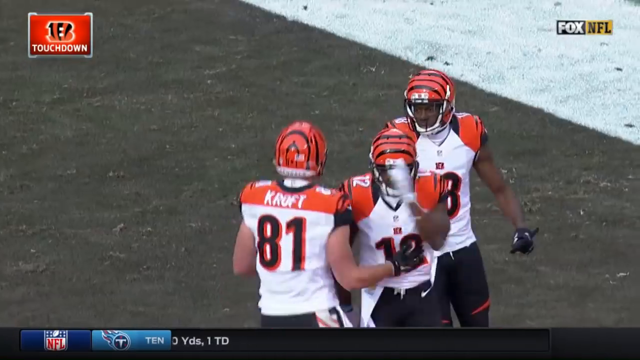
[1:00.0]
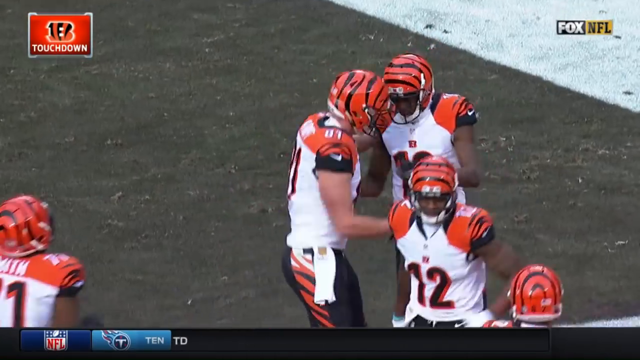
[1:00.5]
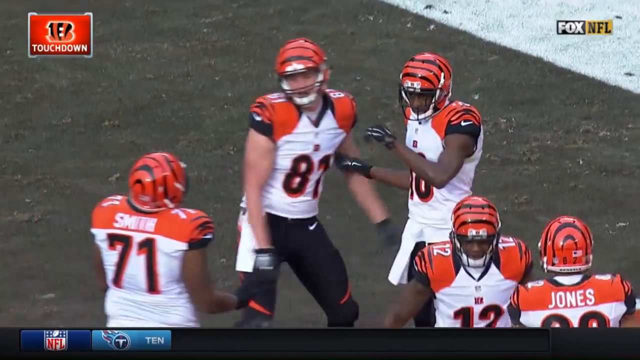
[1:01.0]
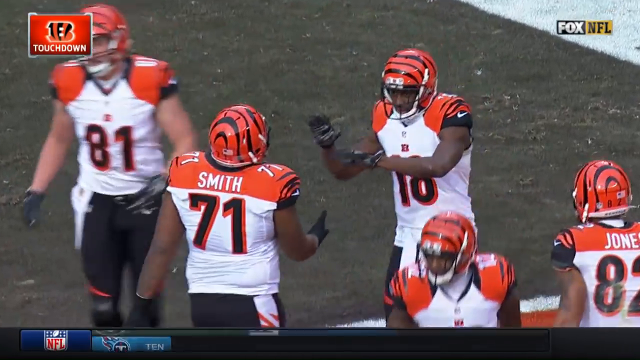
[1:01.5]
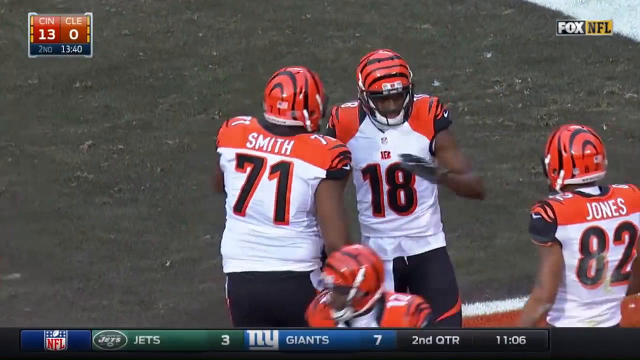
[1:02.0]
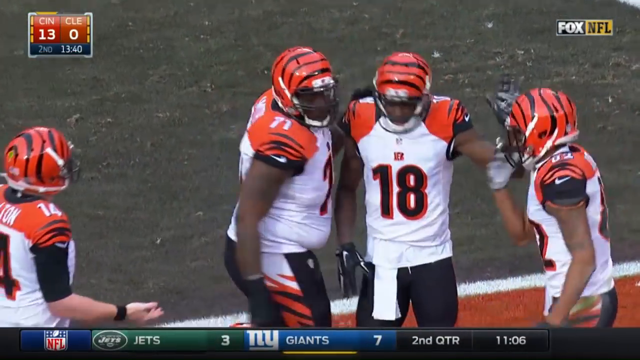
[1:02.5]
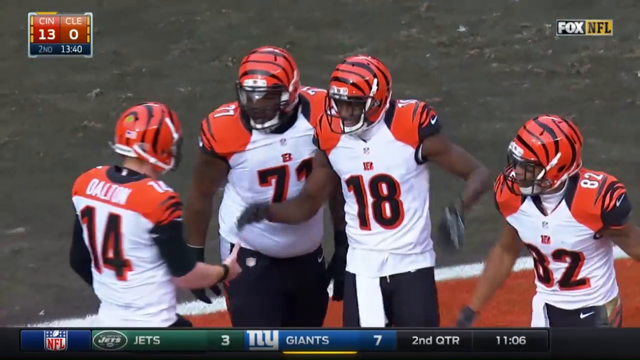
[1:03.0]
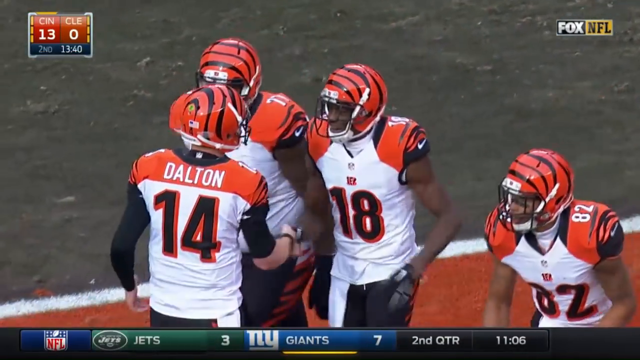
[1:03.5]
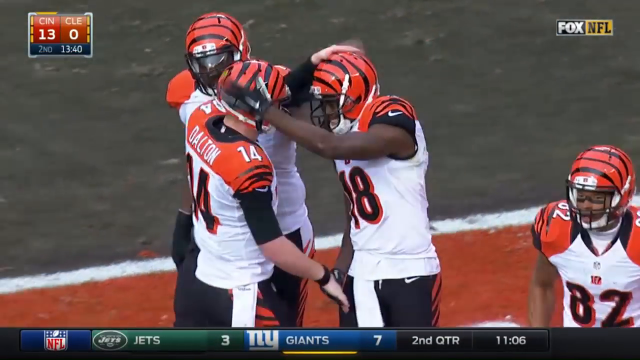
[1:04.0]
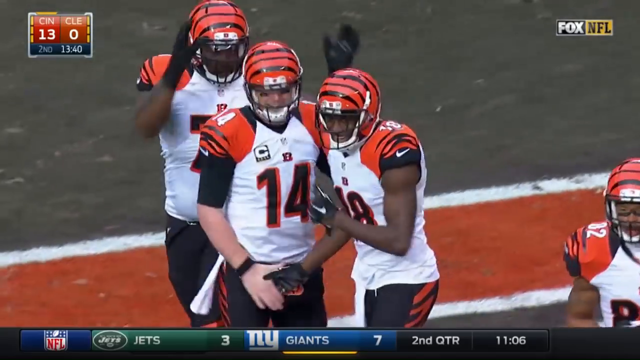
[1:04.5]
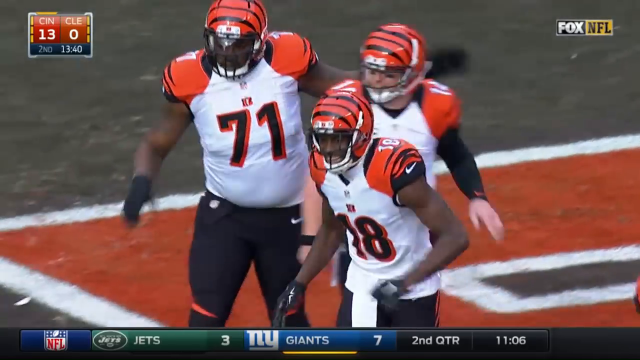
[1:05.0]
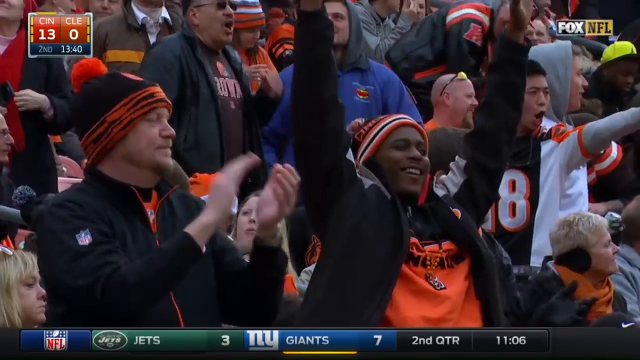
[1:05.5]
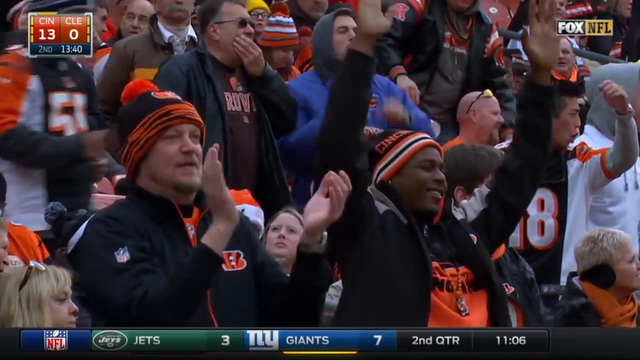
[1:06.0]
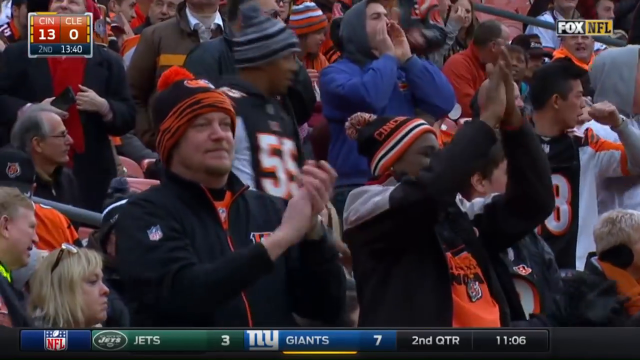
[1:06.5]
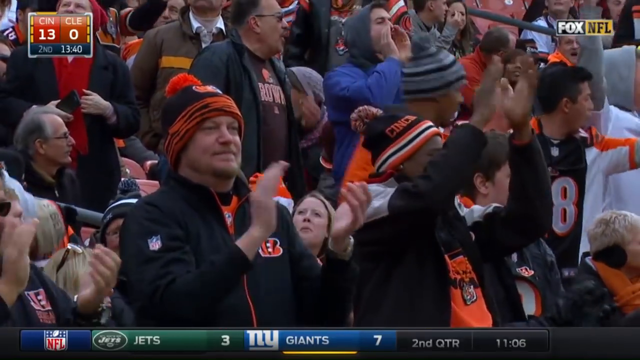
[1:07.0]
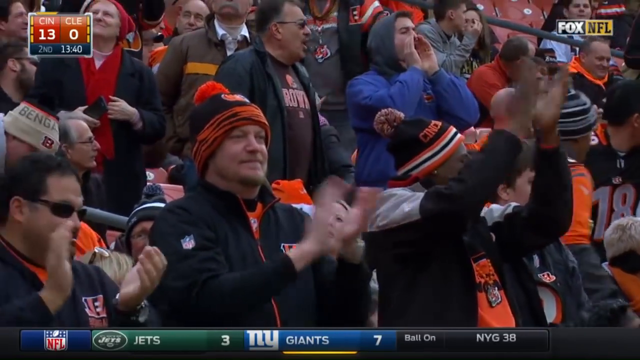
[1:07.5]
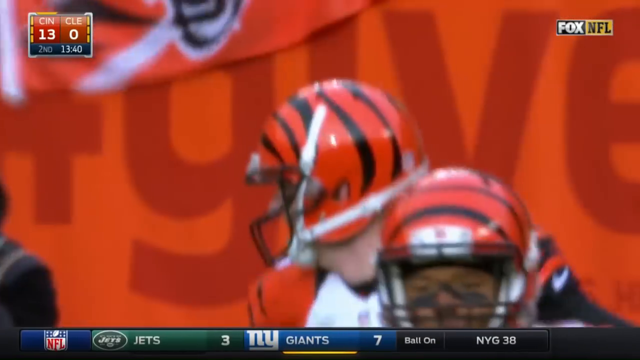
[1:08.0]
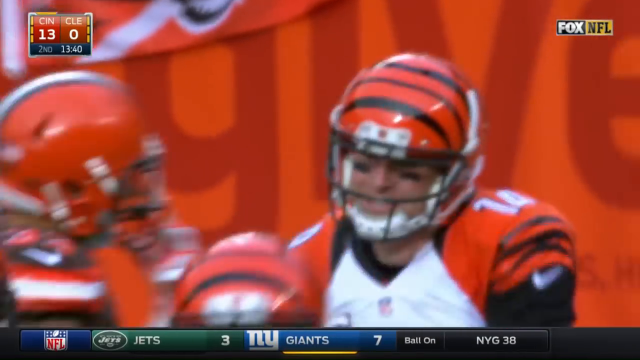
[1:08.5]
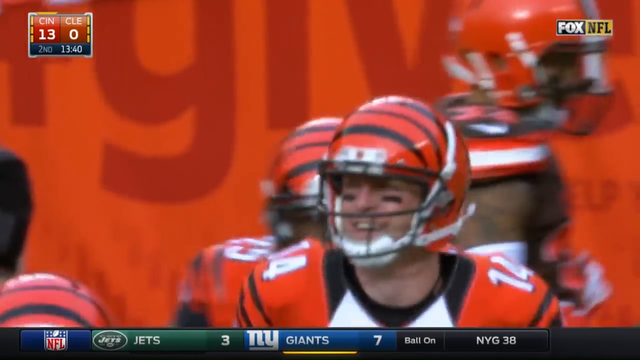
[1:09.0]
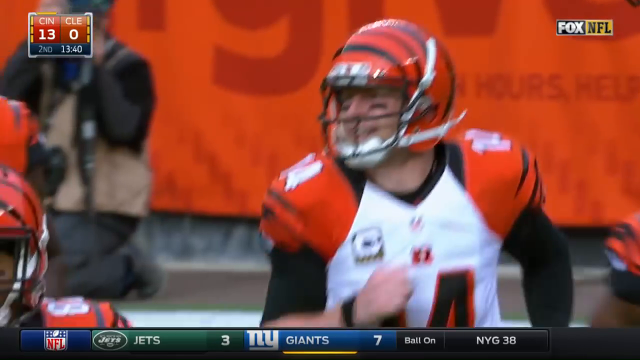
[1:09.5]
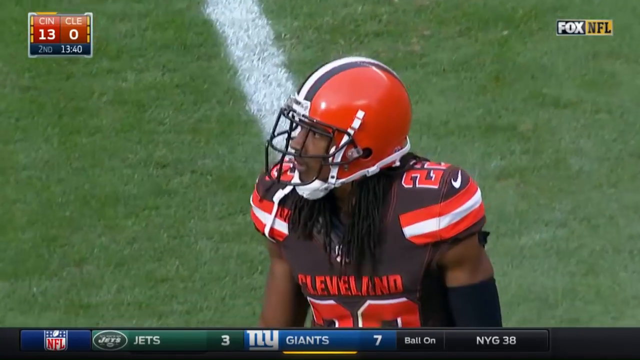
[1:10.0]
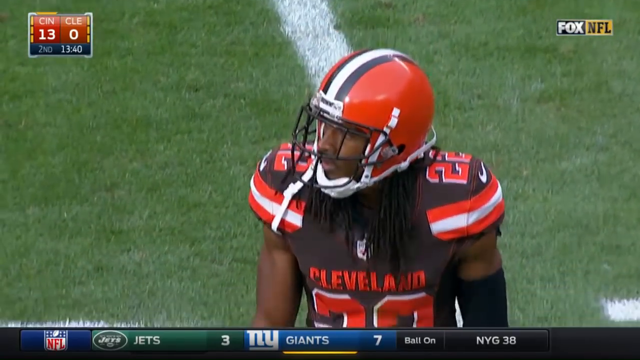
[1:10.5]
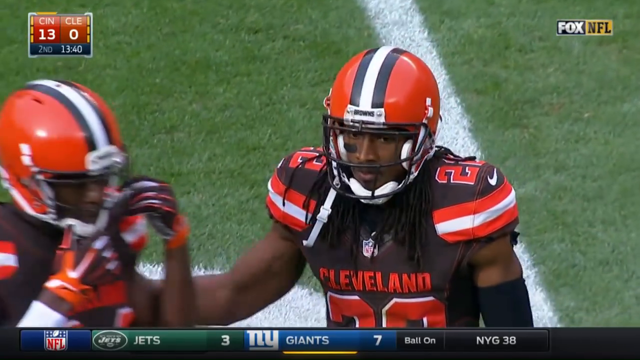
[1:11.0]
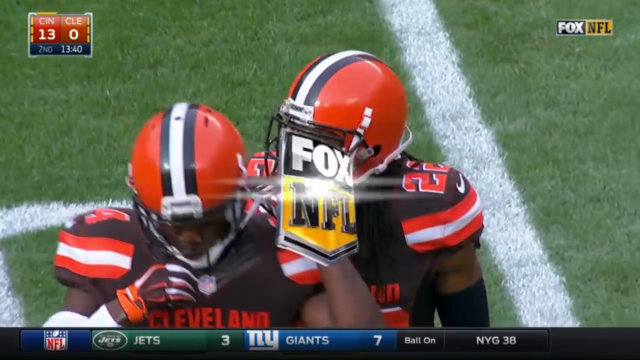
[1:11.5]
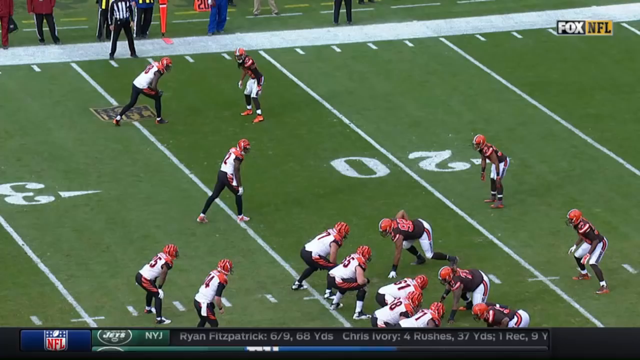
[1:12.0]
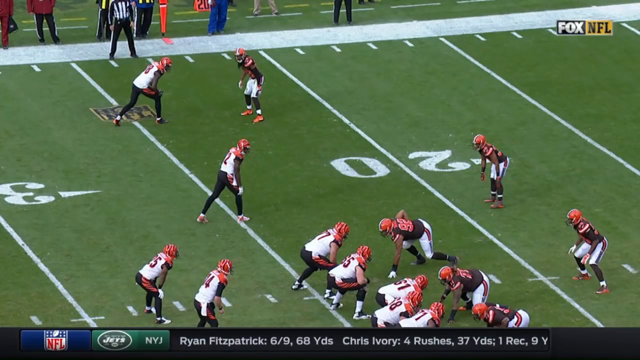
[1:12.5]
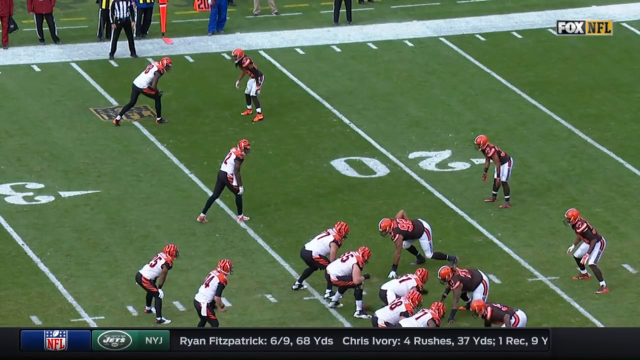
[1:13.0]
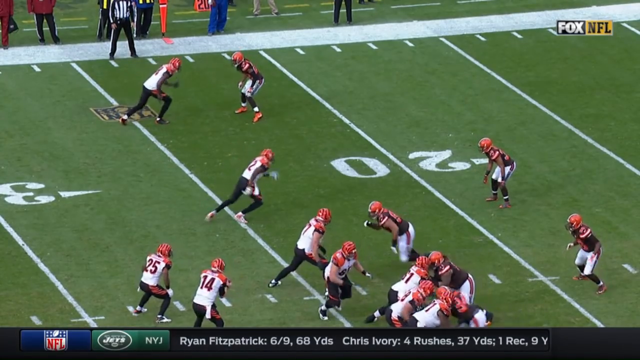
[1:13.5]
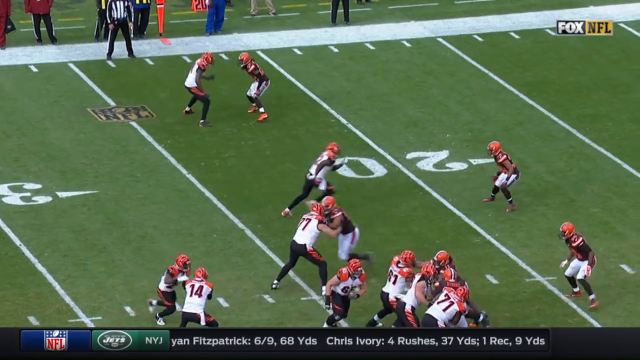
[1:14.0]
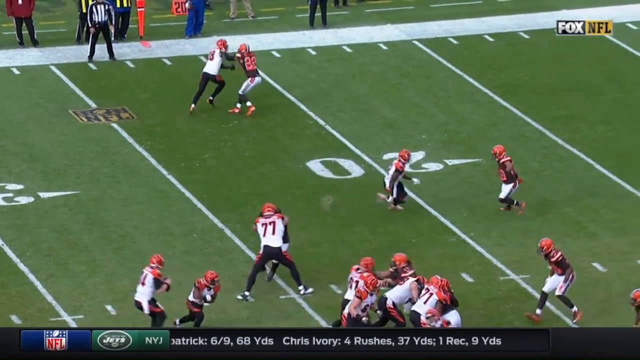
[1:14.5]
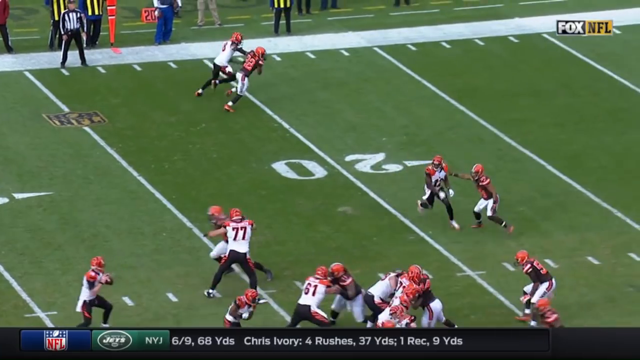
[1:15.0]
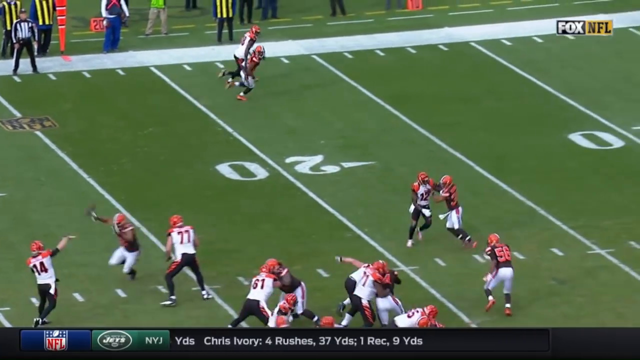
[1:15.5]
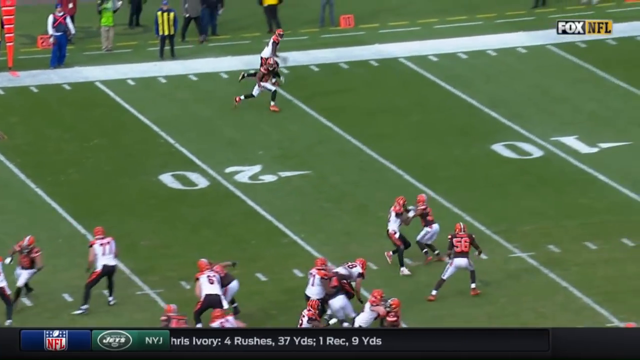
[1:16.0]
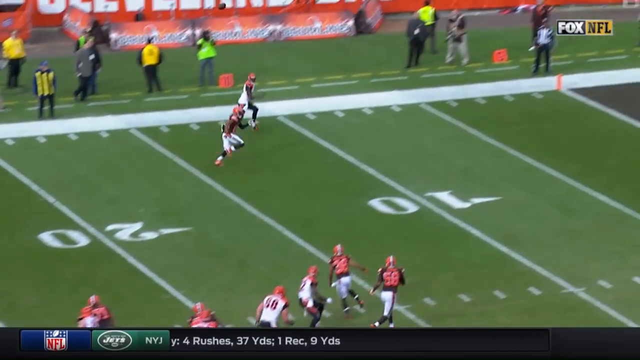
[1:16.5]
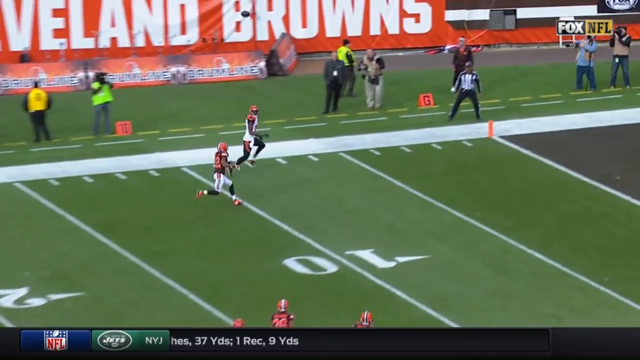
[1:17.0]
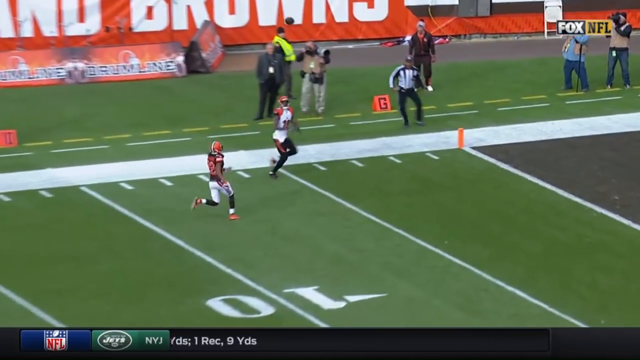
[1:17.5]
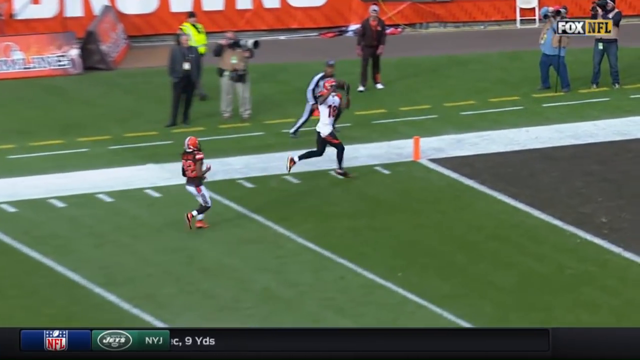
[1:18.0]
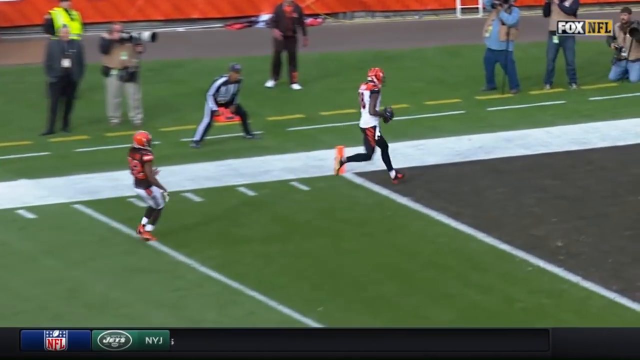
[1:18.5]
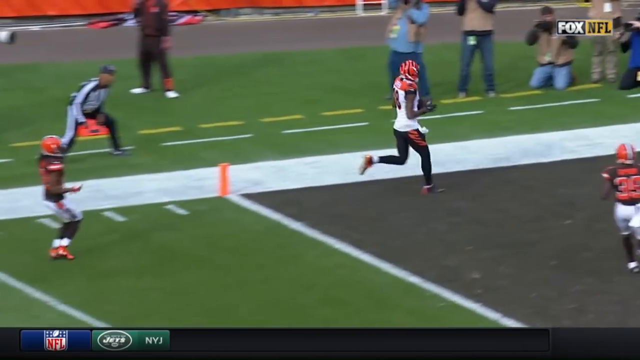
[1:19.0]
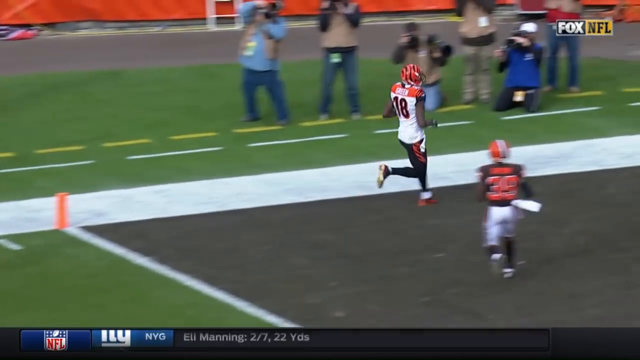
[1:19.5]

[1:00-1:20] AJ Green celebrates his touchdown, Dalton has a huge smile on his face, and the Cleveland Browns defense looks crestfallen. Another action replay of the touchdown shows the right-handed Dalton floating the ball over the head of the defensive back while Green jogs onto it and runs in to score. Green celebrates in the end zone with teammates number 81 Kroft, 71 Smith and 82 Jones. Fans stand up and applaud. A score update shows the New York Giants beating the New York Jets 7 to 3 in the second quarter.